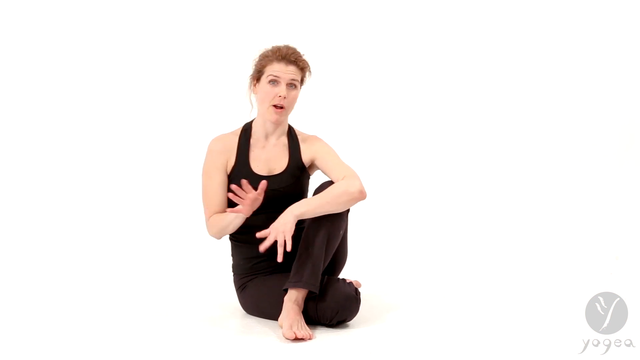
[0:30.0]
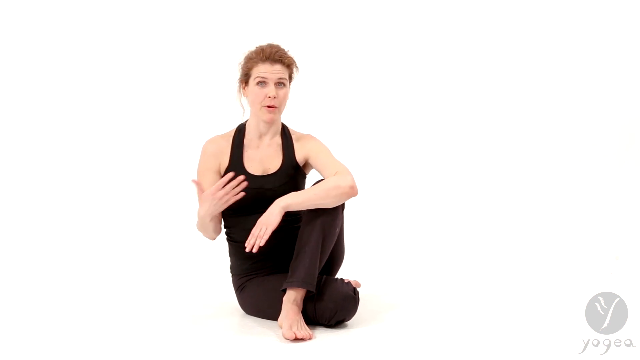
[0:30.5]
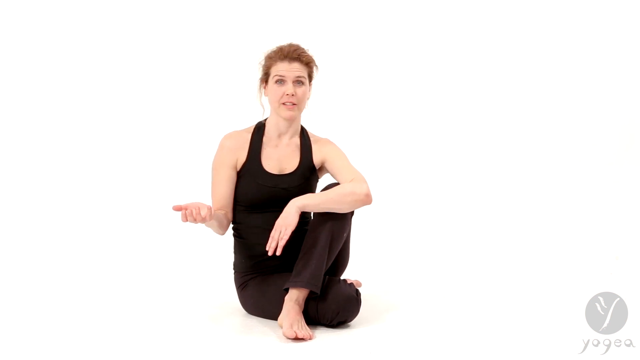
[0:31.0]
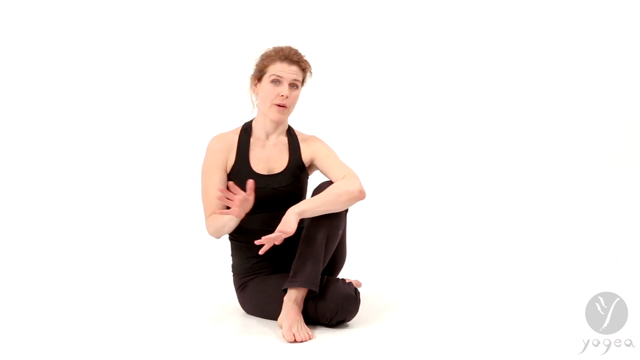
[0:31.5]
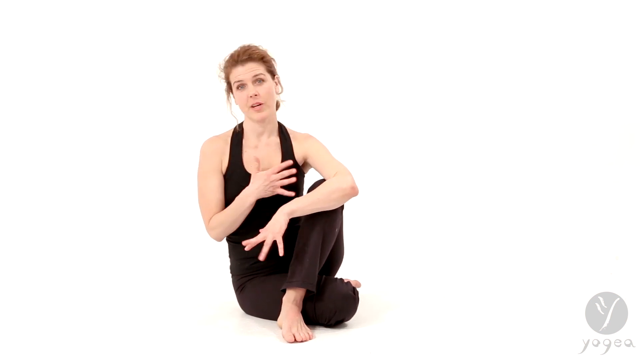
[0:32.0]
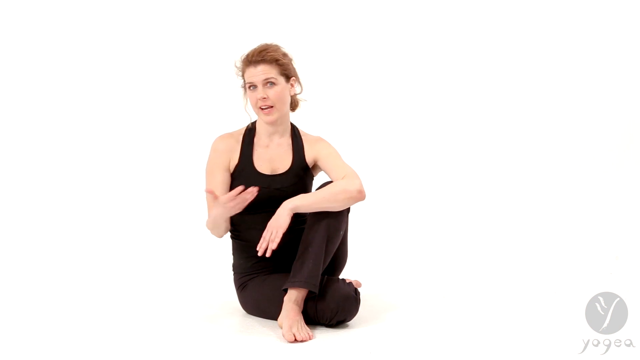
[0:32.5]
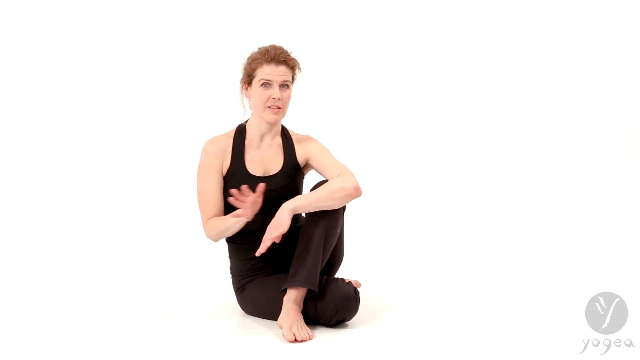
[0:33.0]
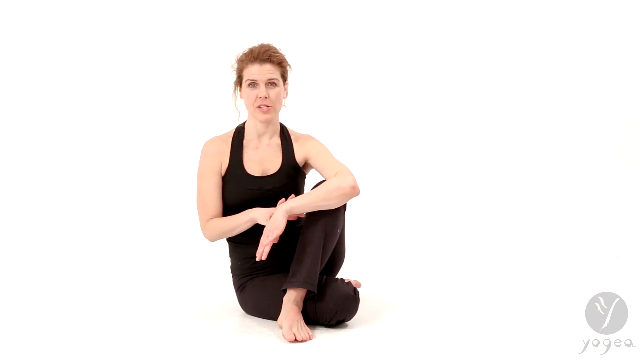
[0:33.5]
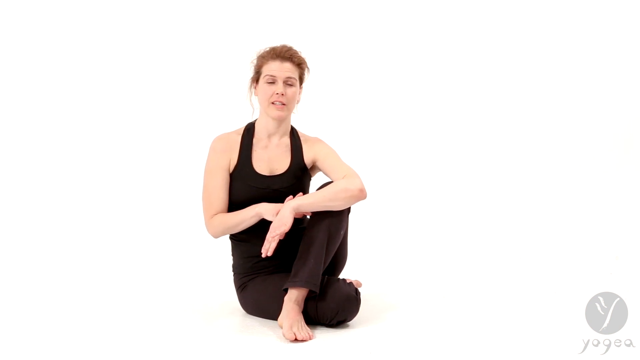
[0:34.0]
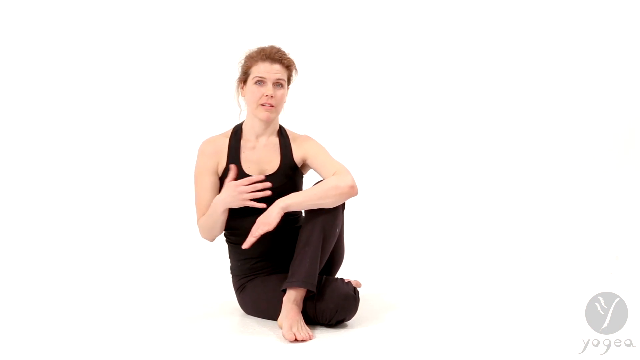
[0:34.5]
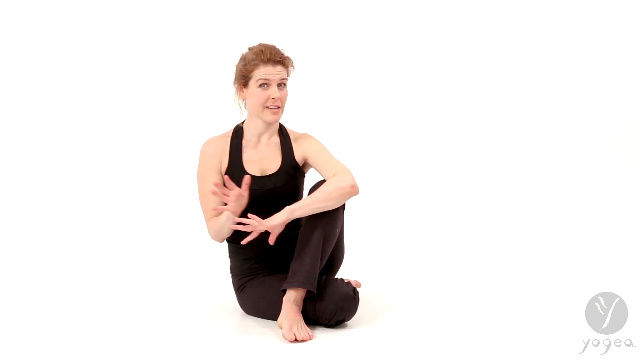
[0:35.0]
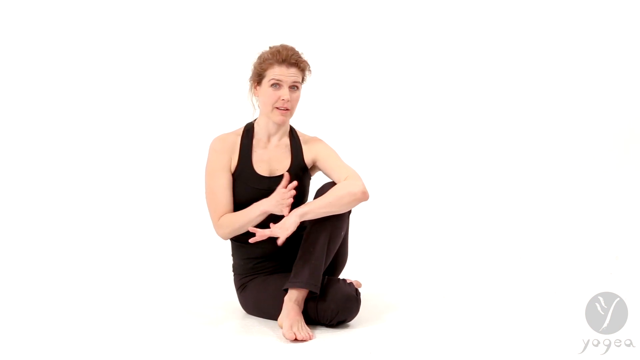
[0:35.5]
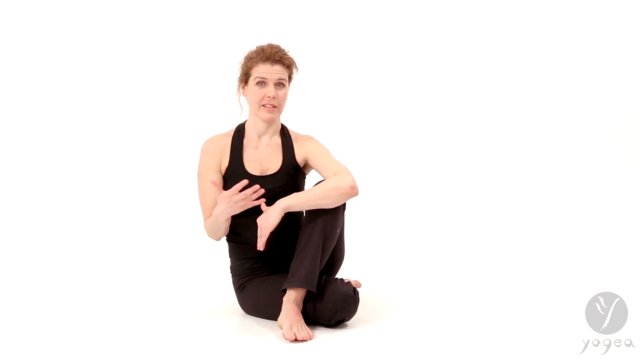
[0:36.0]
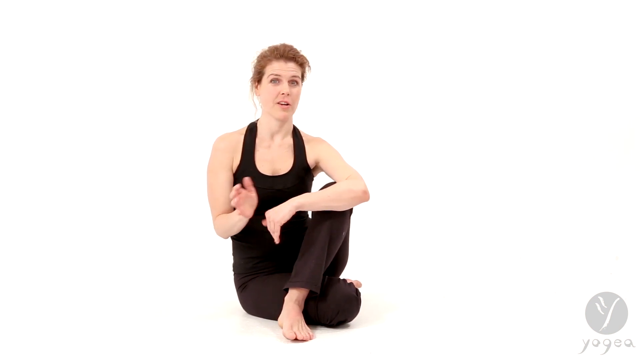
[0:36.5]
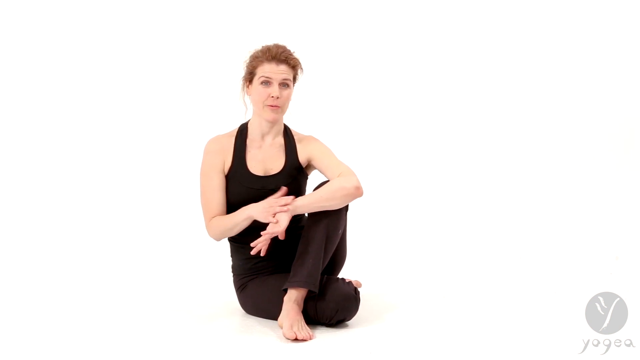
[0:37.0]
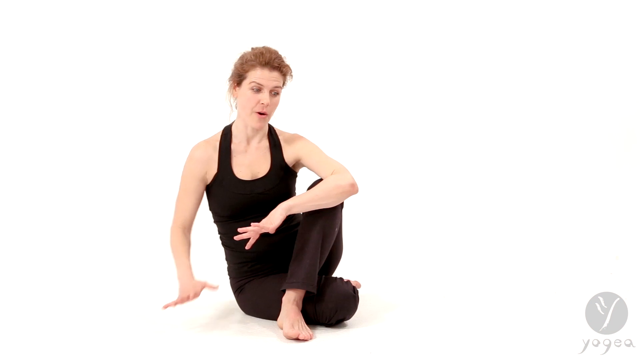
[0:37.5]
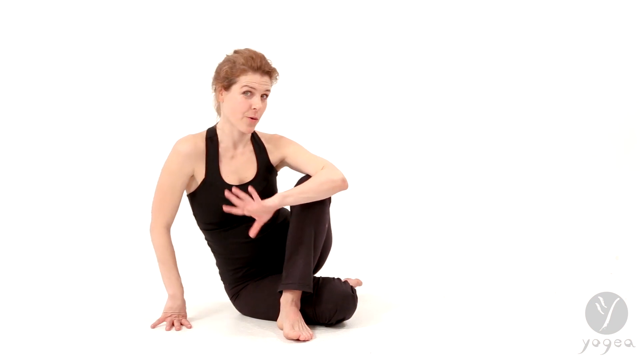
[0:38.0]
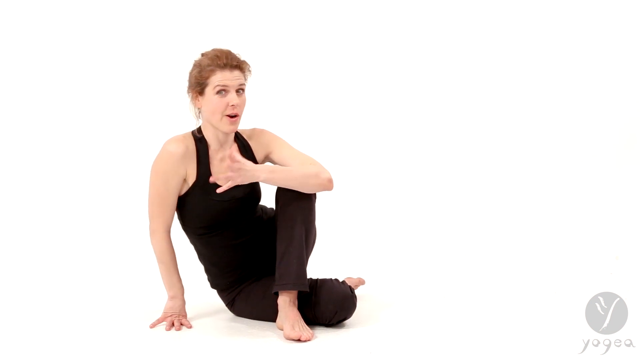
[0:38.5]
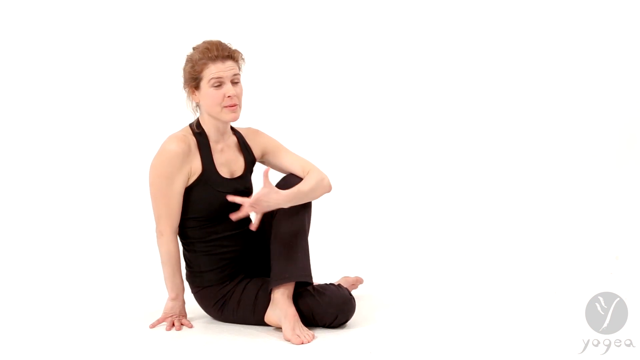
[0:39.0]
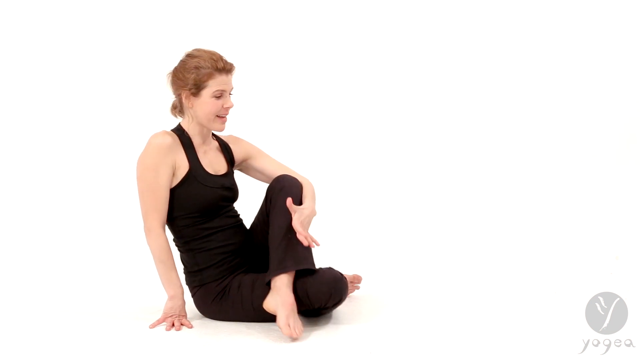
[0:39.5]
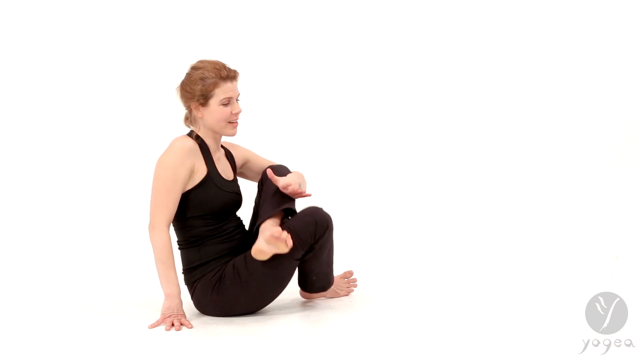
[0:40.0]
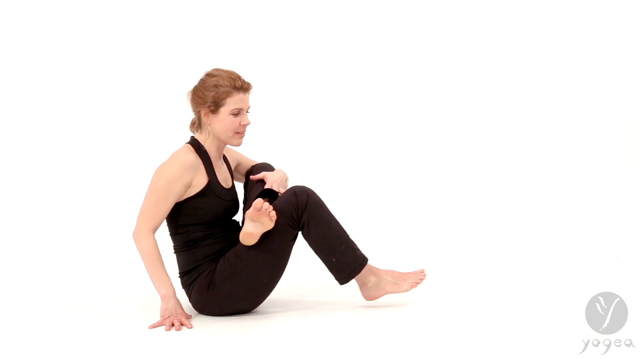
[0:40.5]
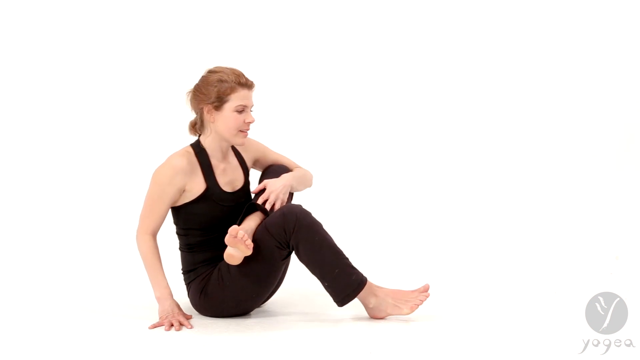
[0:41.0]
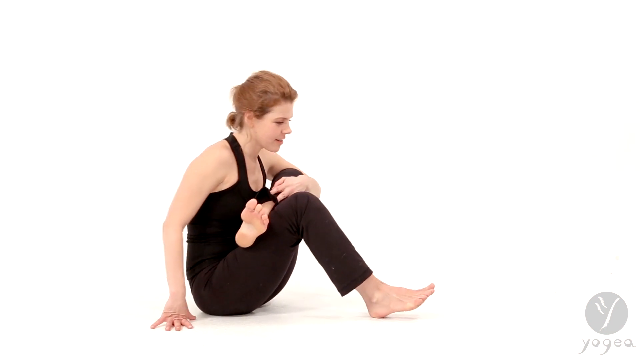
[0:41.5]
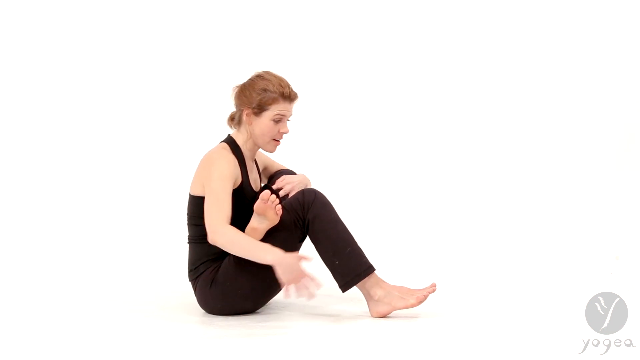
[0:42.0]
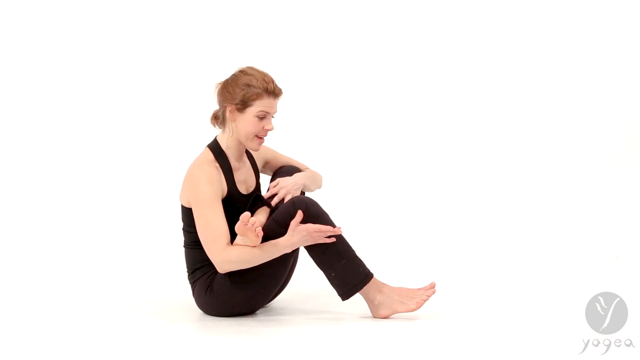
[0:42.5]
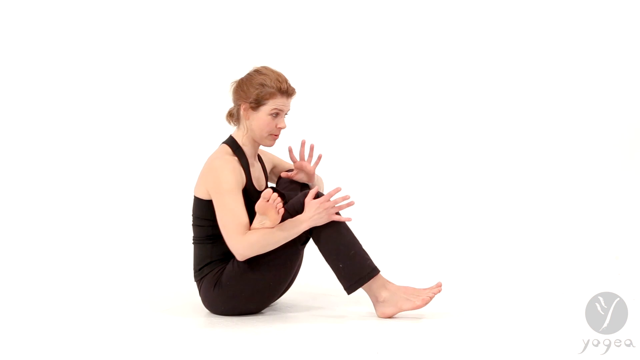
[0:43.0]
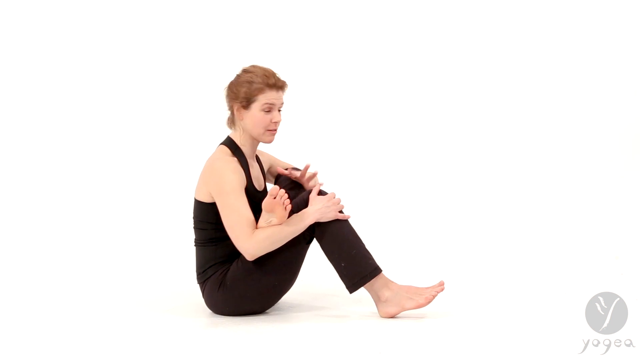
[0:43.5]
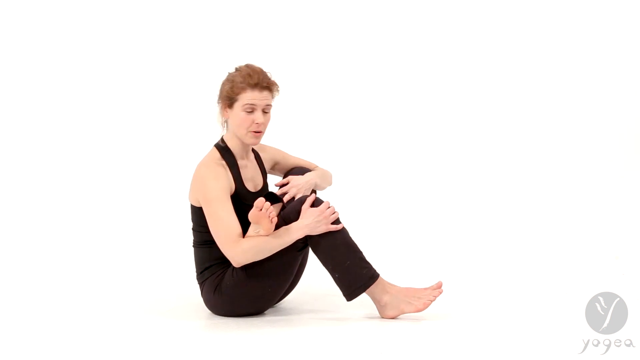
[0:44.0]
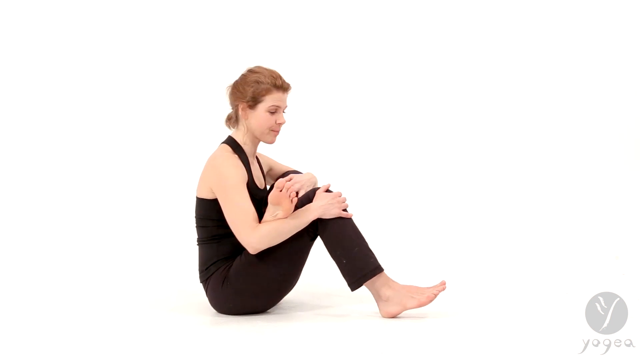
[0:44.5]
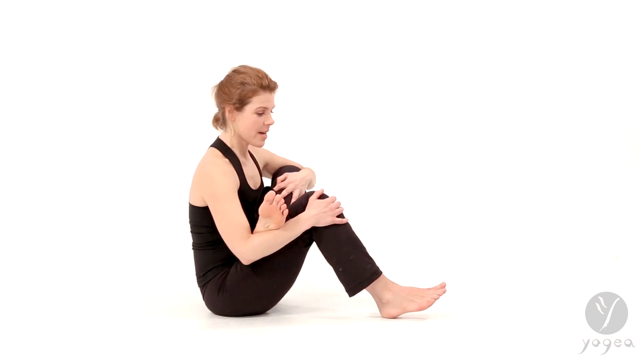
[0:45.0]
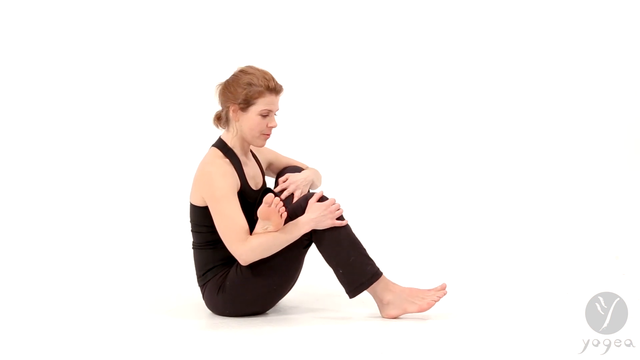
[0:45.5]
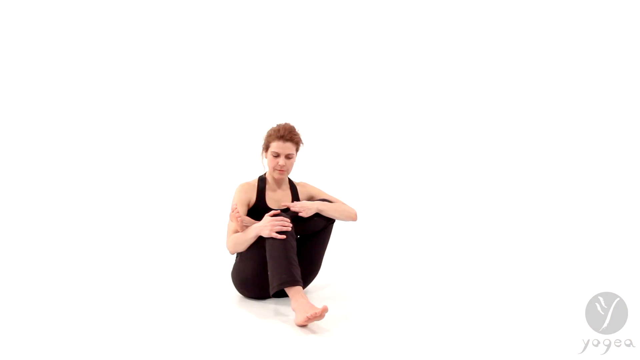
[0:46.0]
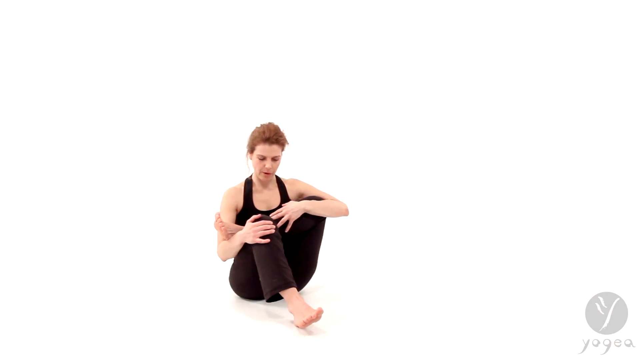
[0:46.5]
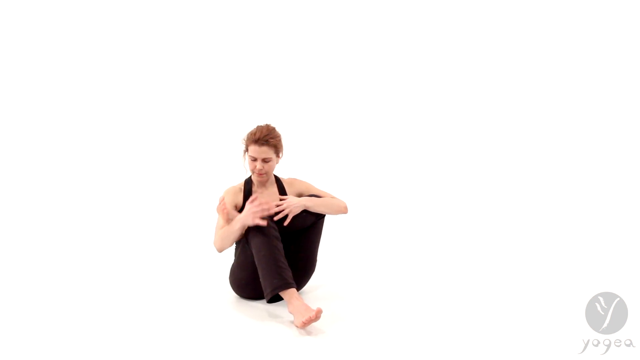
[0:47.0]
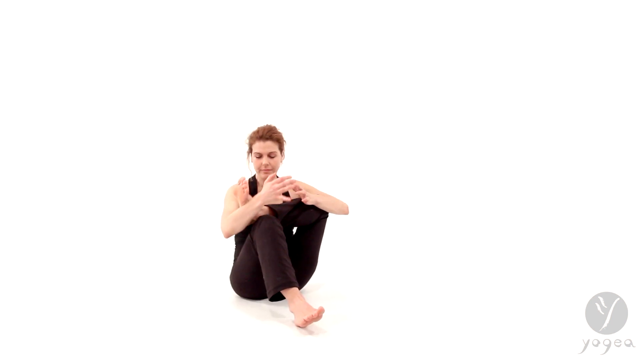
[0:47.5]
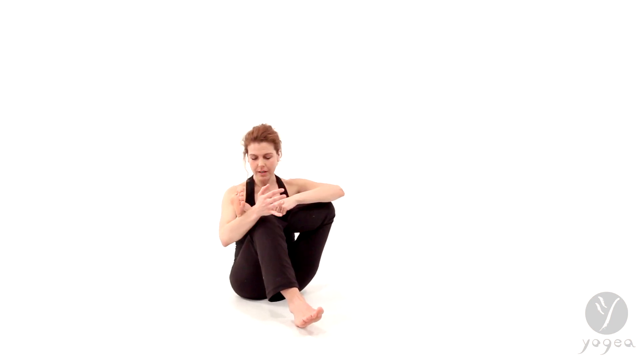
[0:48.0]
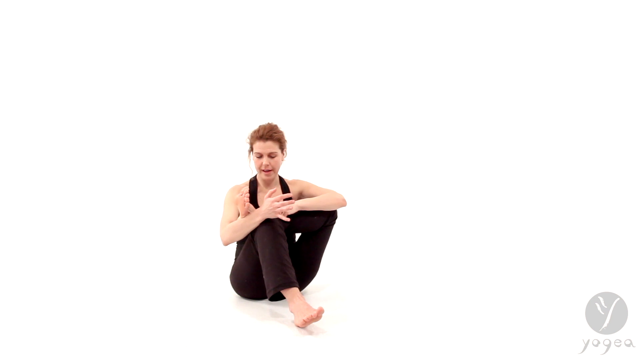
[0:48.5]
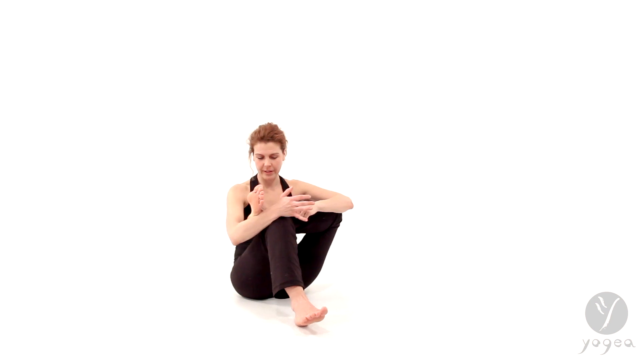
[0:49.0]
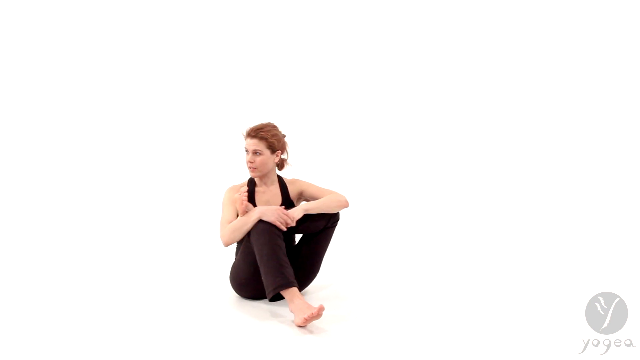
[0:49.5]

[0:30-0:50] The woman in the yoga top and trousers sits on a white floor against a white background. Her left leg is tucked round to the back of her right thigh, and her right leg is bent with the foot in front of her left thigh. Her right arm is bent around her right knee with the hand pointing downwards. Her left hand is splayed in front of her chest as she talks, then waves to the side and comes back over her right hand. Her right hand splays downwards, and her left hand swoops from side to side over her right arm, then rests two fingers on her right arm. Her hands separate, and she moves her left hand over her right hand, with both hands splayed. Her left hand comes out again, then back over the top and touches her right hand. She places her left hand on the floor with the fingers apart and the thumb behind, while her right arm is hooked around her right leg with the fingers pointing upwards and the thumb to the side. She leans slightly and twists a little, moving so that she sits with her side facing the camera. Her left leg is bent with the foot partly on the floor, and her right knee is bent with her right foot over her left thigh. Her right arm is around her right knee, with the hand coming across to her left knee. She grabs her right knee with her hand, gently sits forward, and brings her right arm together with the bottom of her left foot. Her right leg is bent with the heel on the floor; her right hand is on her right knee and her left arm is around her left knee. She rocks from side to side, slightly lifts her left leg, and rocks from side to side again.